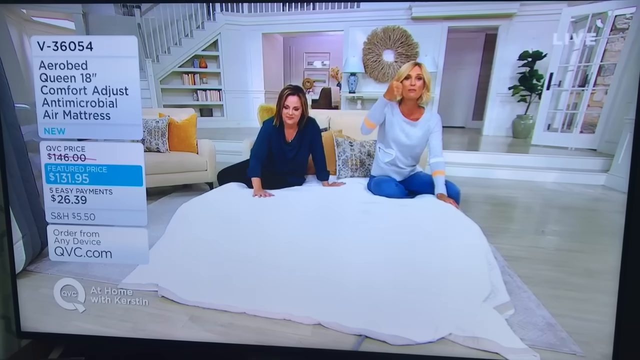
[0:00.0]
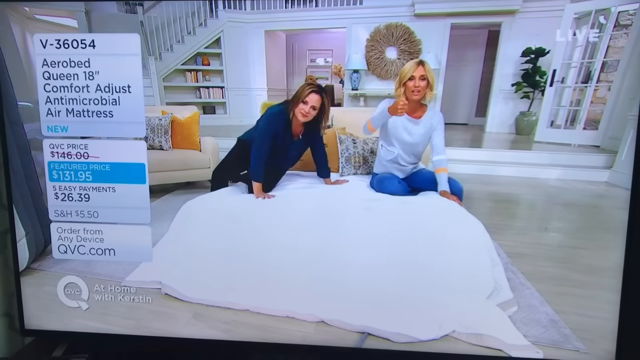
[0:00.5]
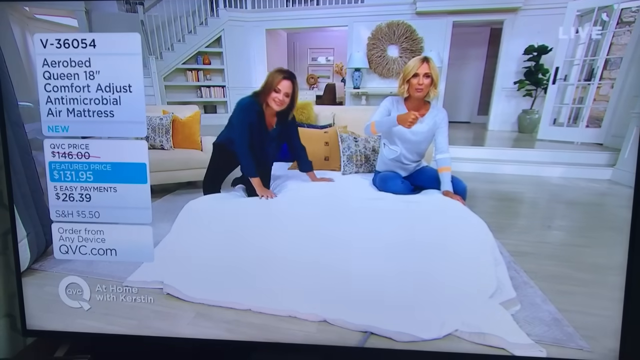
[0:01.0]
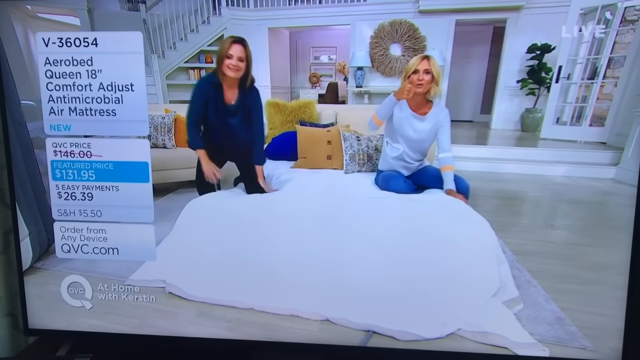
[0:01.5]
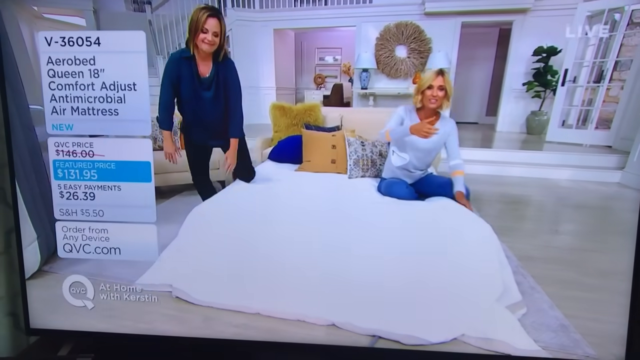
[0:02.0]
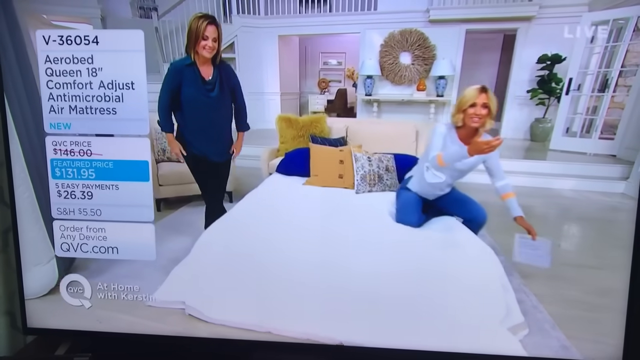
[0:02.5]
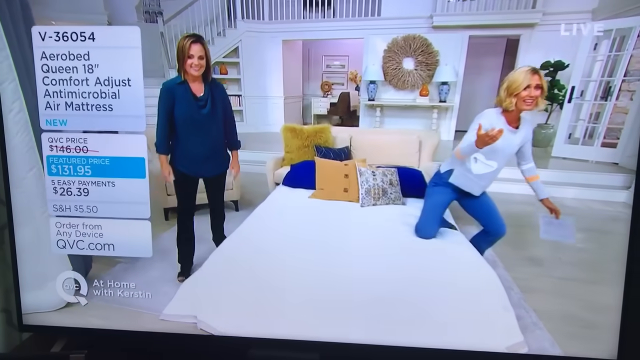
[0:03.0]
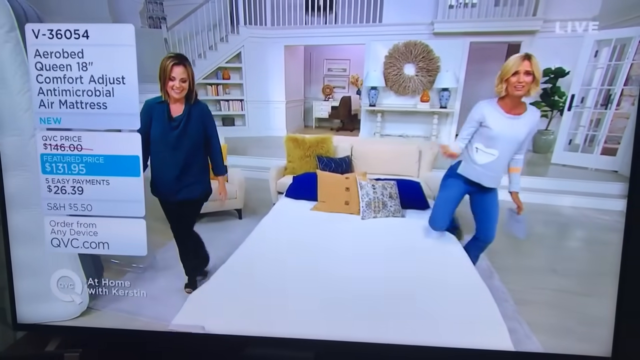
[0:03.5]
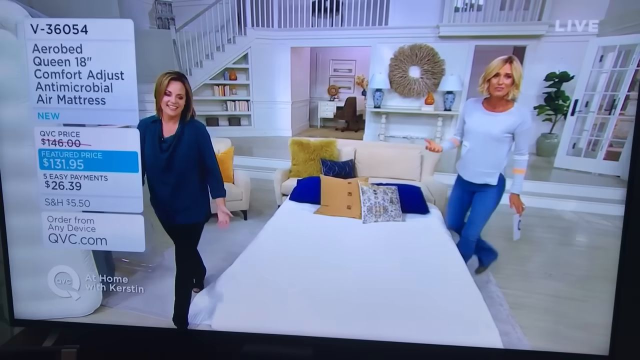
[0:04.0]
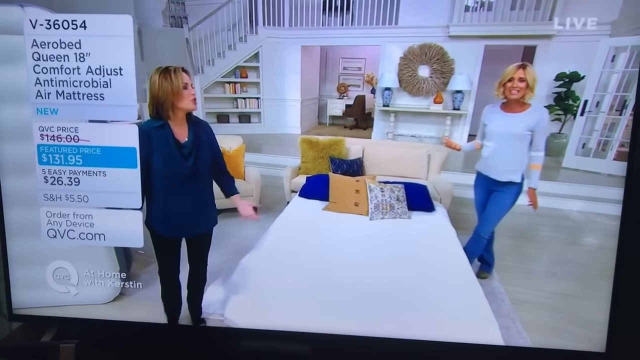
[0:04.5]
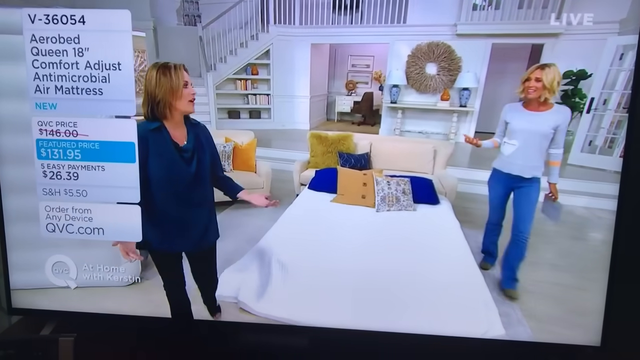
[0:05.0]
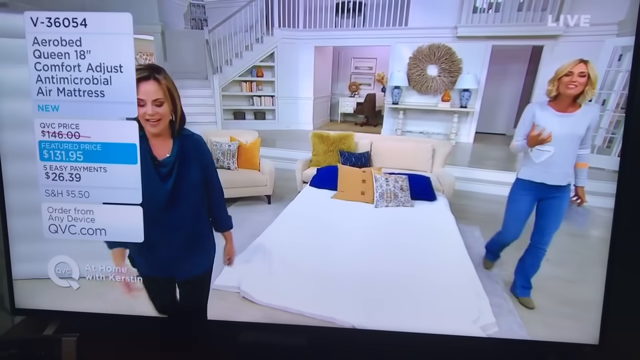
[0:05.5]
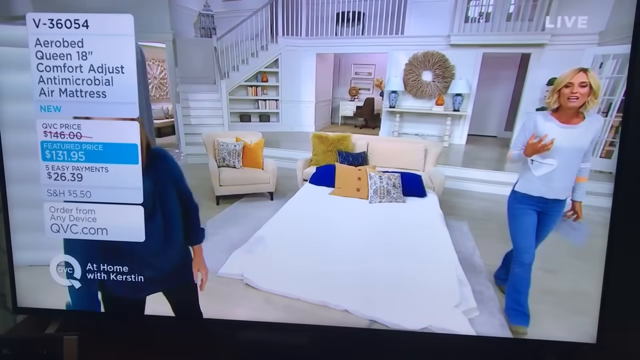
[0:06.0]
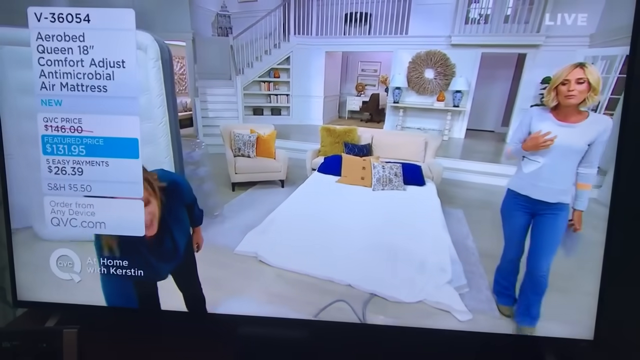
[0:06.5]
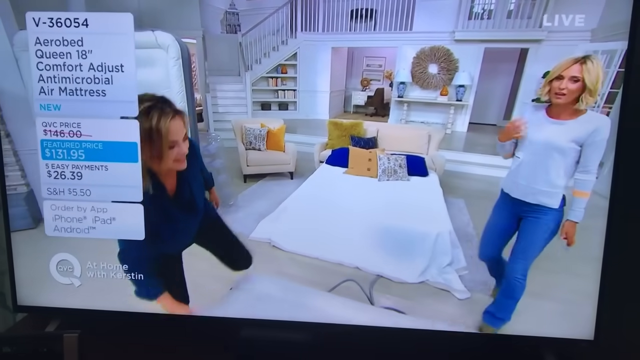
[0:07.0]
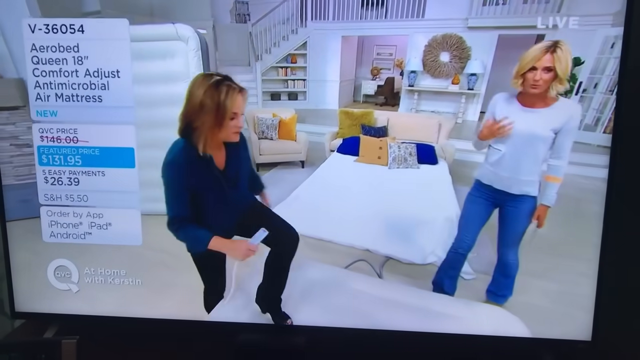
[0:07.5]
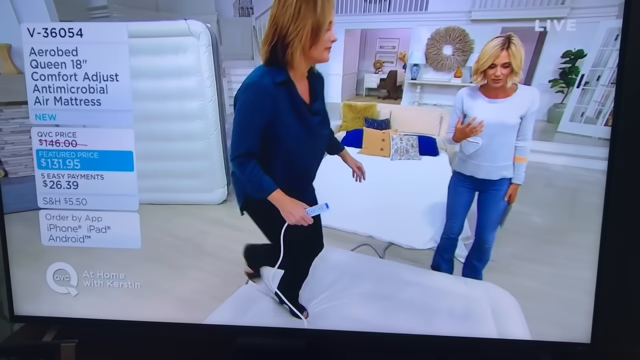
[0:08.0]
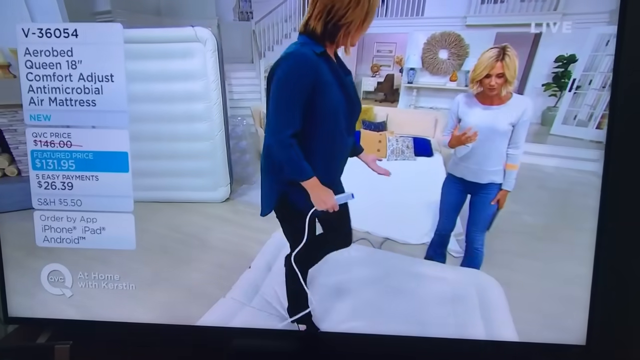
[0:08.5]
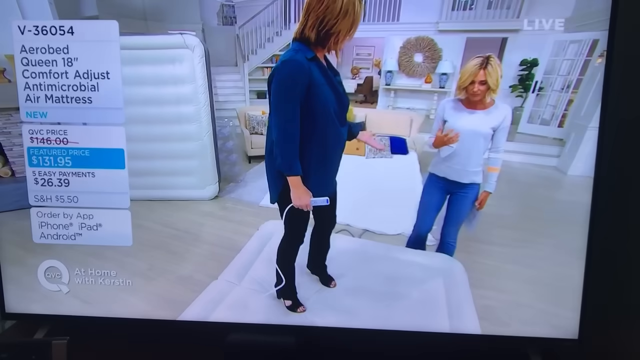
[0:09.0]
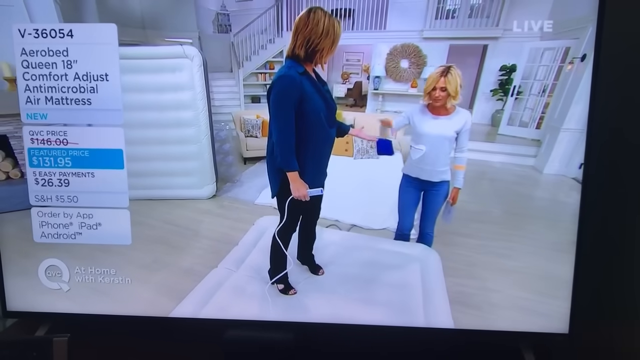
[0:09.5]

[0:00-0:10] The video is from QVC, a television program that sells items to viewers. It opens on two women in a studio made to look like a home, which is very bright, white and well-lit. The women, who look to be in their late 30s, are on a queen-size bed with a white comforter and a variety of cushions and pillows. Information about the QVC product being sold appears in the upper left corner and along the left side of the video: the item number at the top is "V36054", and the product is the "AeroBed Queen 18-inch Comfort Adjust Antimicrobial Air Mattress".